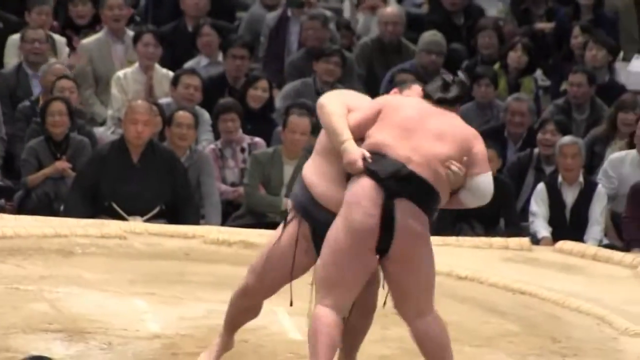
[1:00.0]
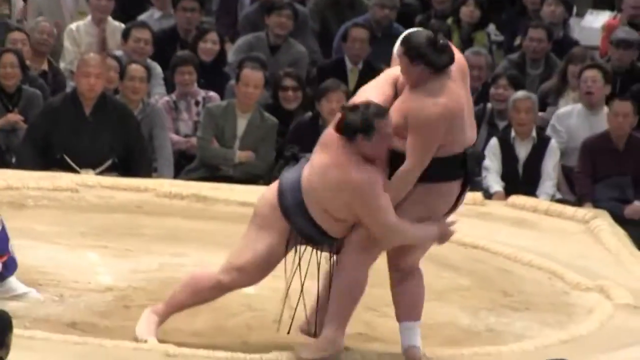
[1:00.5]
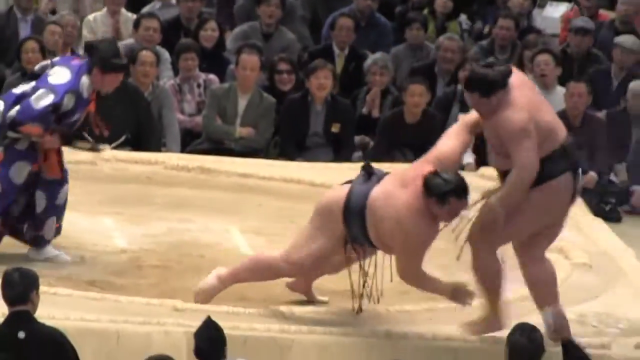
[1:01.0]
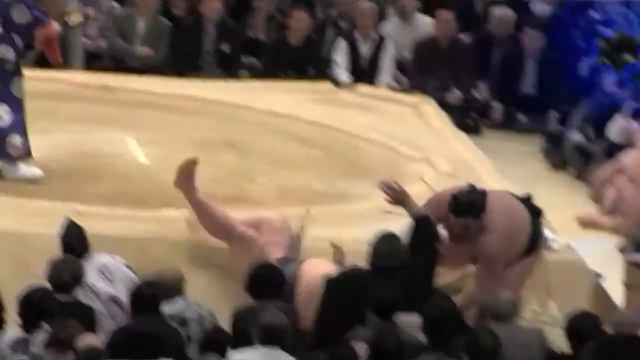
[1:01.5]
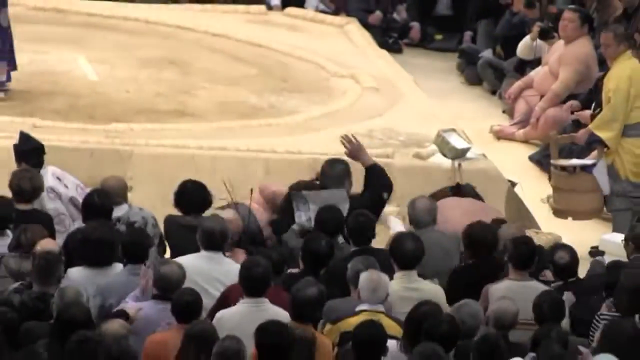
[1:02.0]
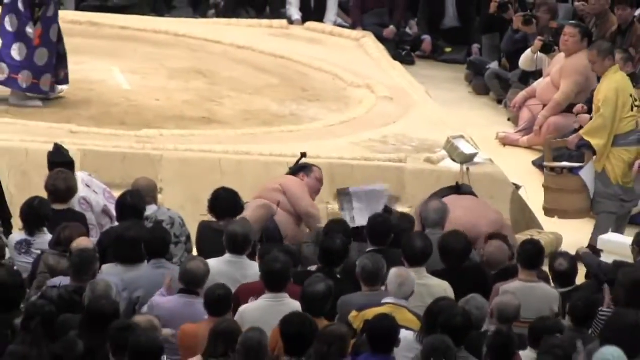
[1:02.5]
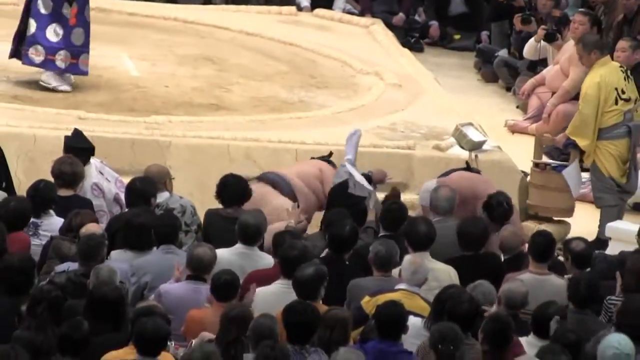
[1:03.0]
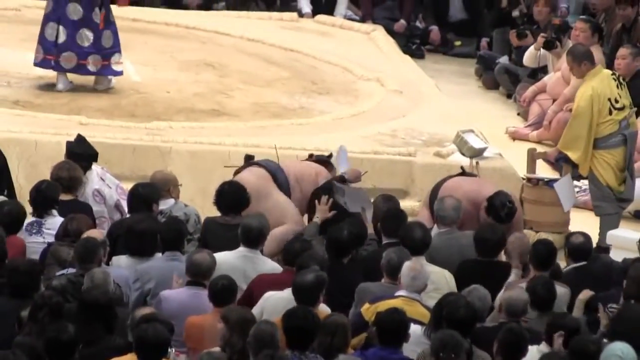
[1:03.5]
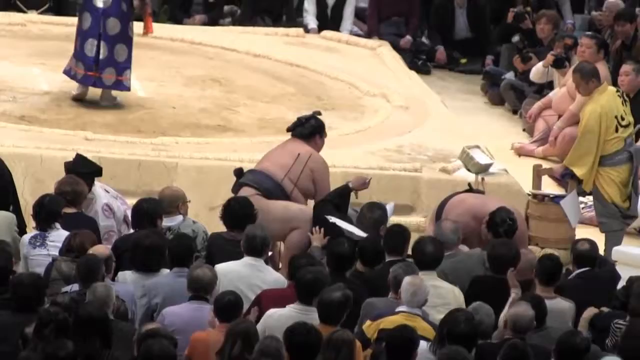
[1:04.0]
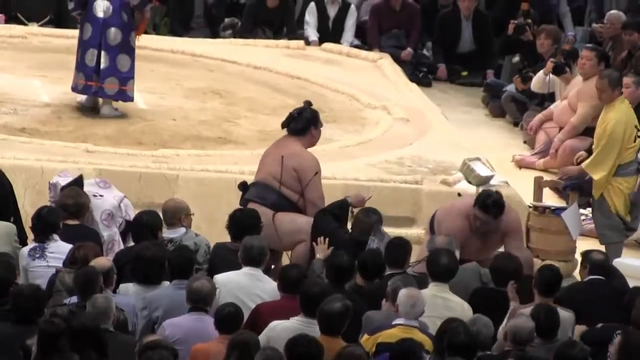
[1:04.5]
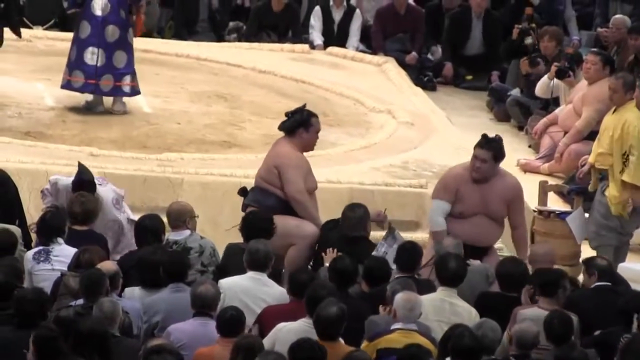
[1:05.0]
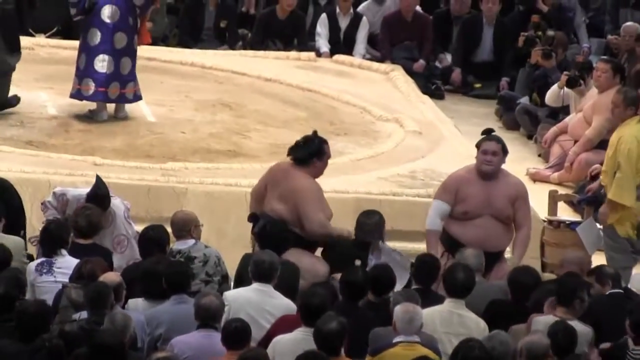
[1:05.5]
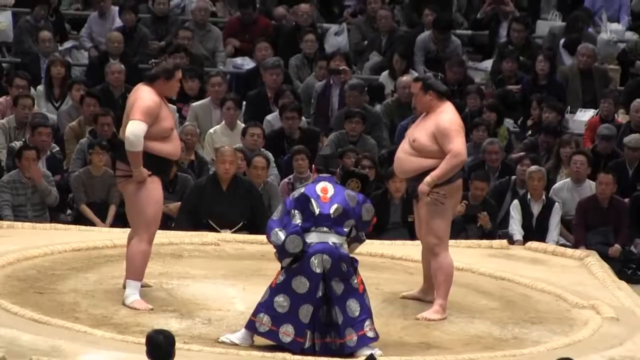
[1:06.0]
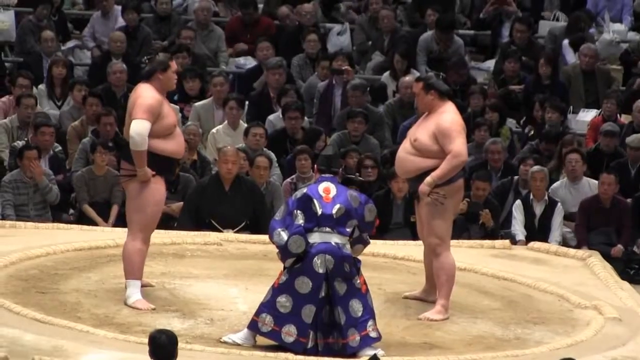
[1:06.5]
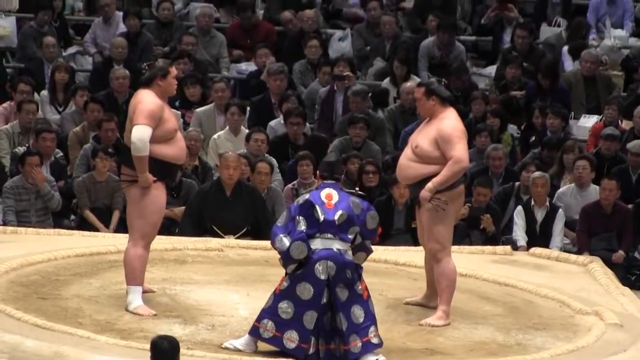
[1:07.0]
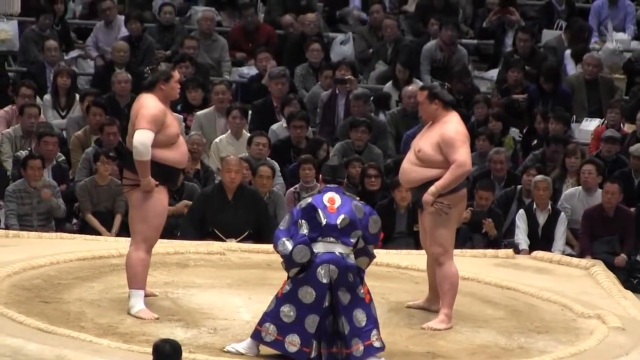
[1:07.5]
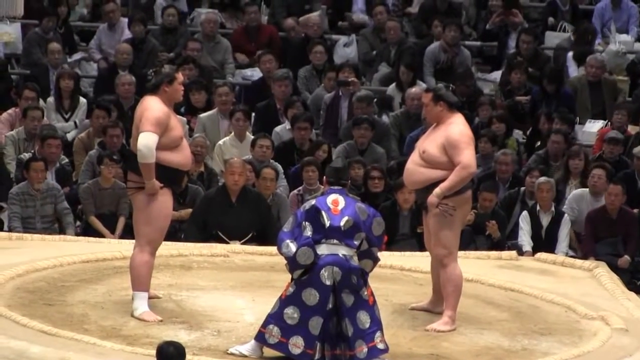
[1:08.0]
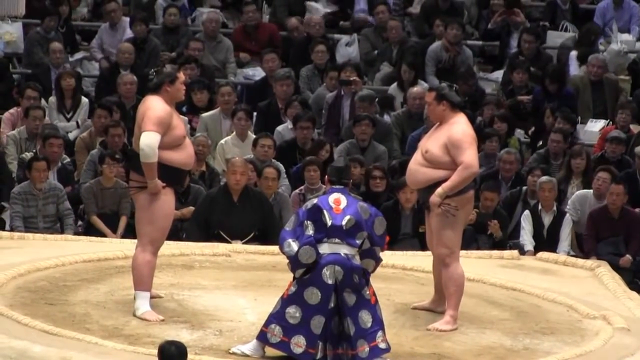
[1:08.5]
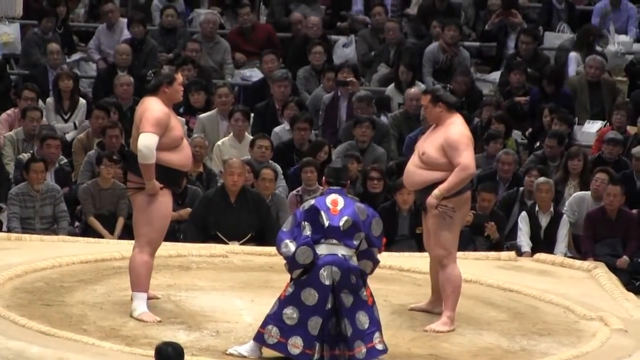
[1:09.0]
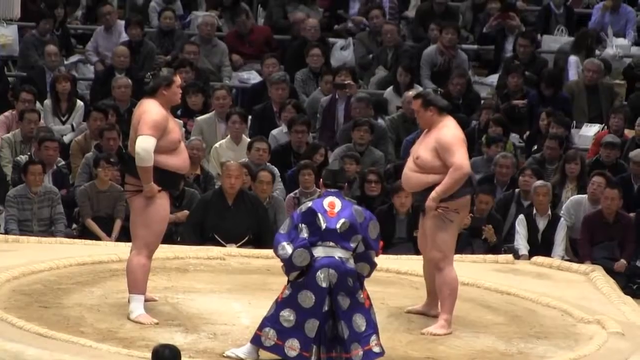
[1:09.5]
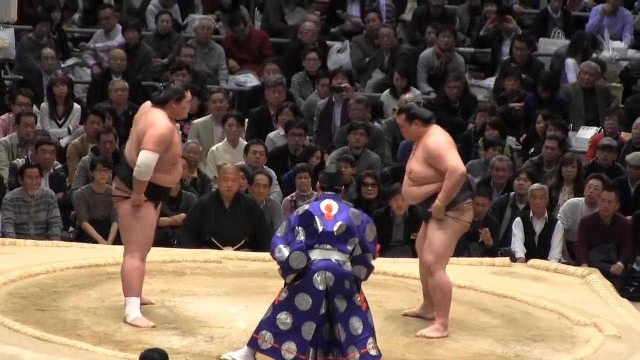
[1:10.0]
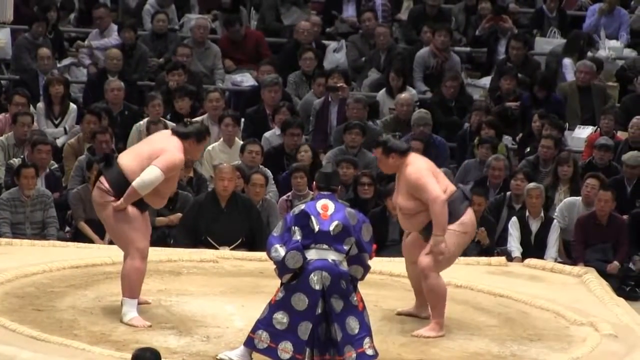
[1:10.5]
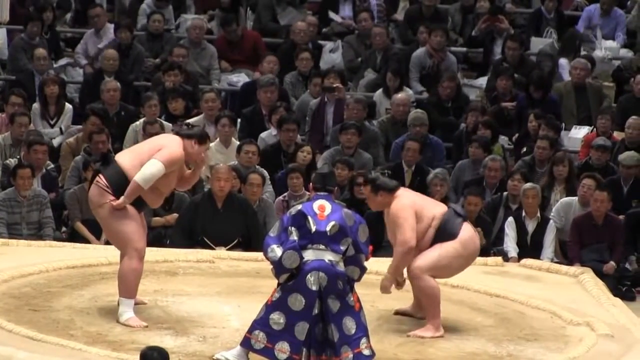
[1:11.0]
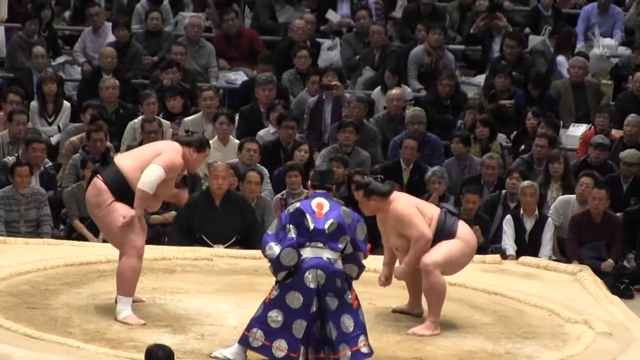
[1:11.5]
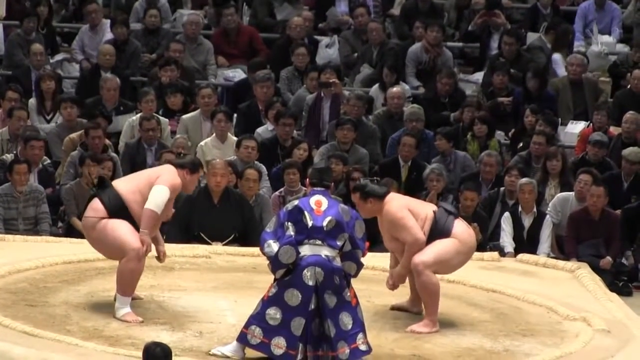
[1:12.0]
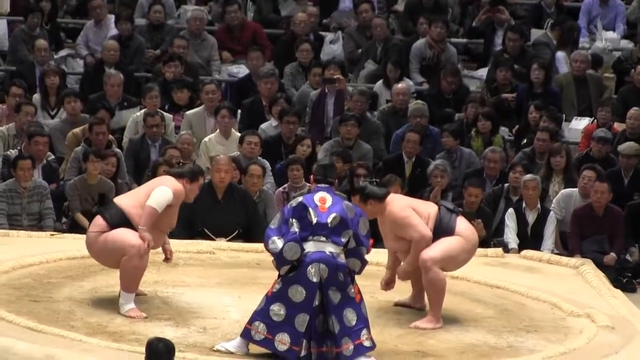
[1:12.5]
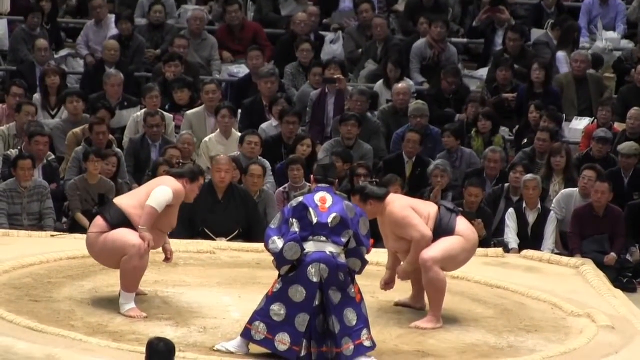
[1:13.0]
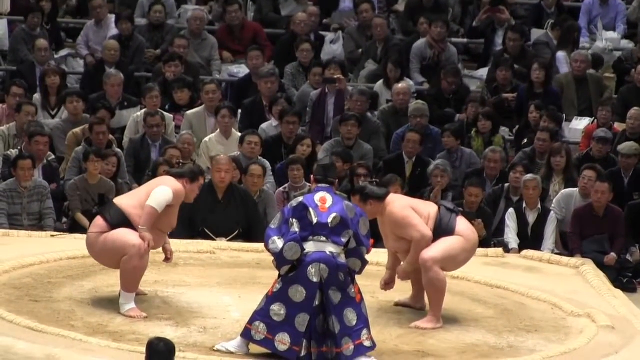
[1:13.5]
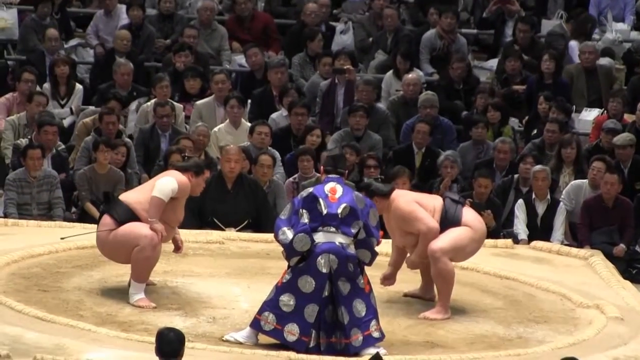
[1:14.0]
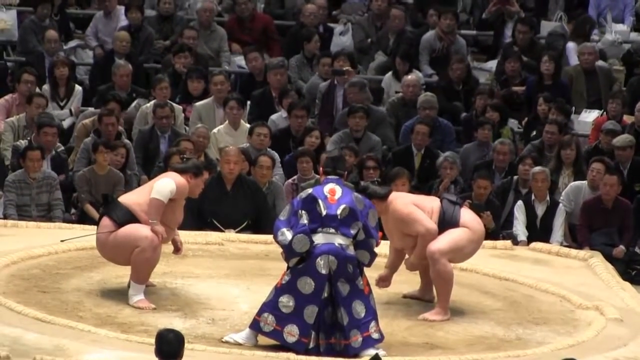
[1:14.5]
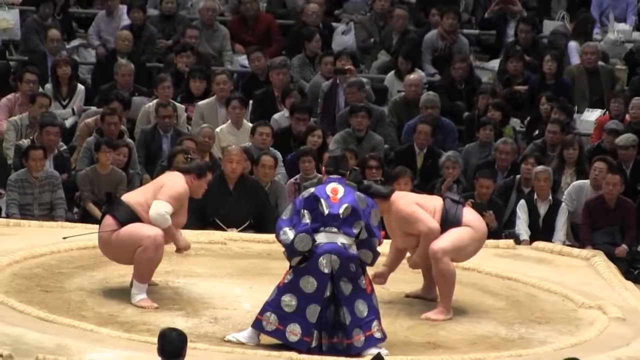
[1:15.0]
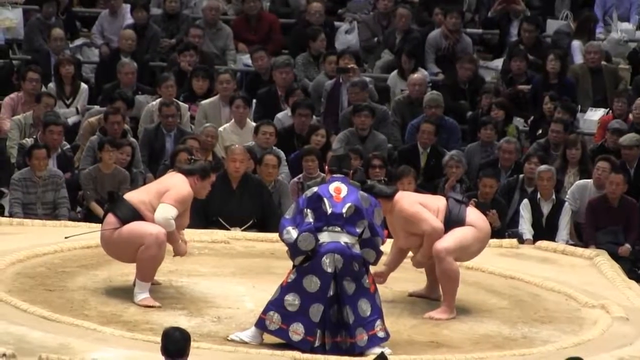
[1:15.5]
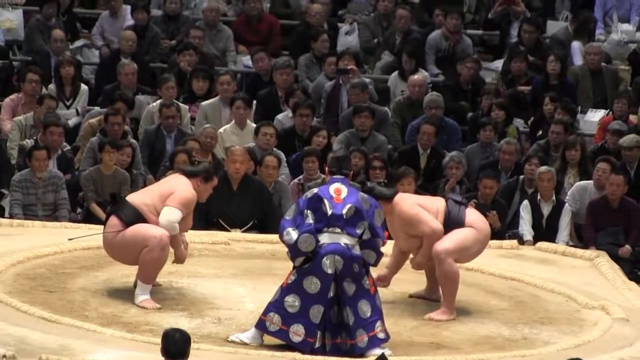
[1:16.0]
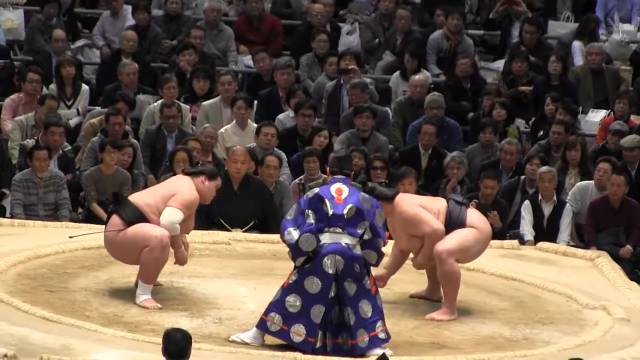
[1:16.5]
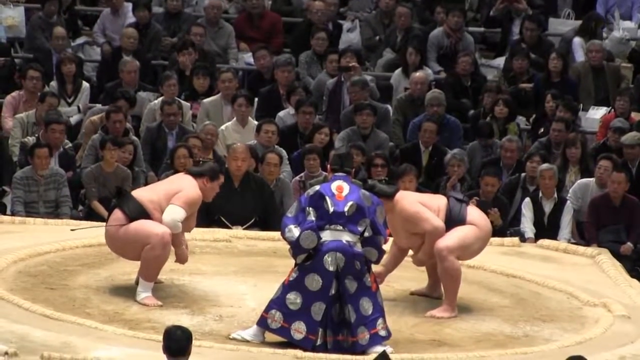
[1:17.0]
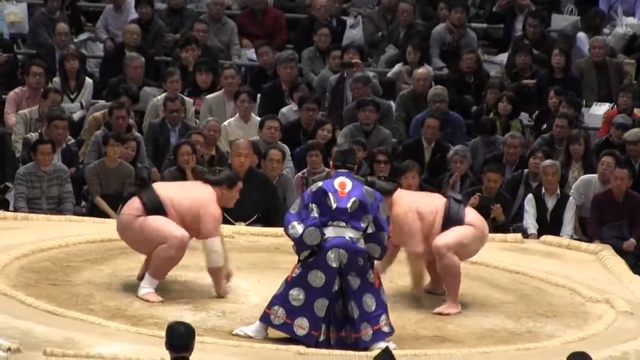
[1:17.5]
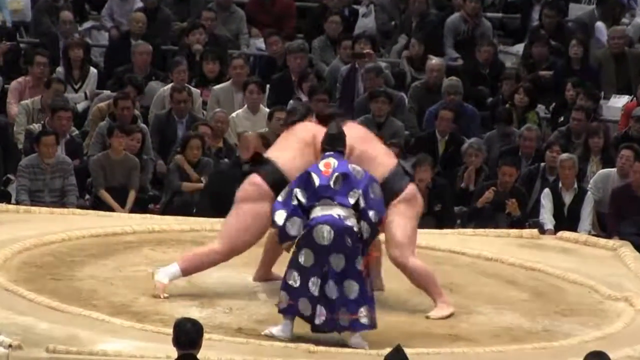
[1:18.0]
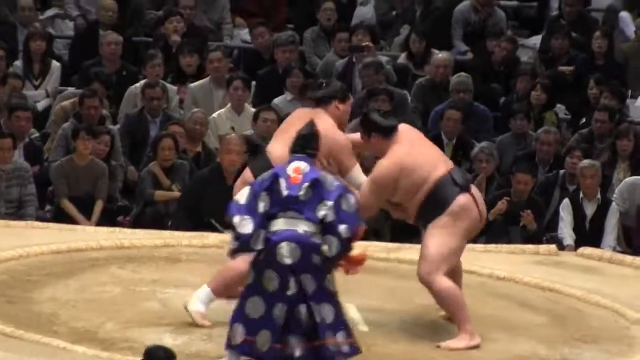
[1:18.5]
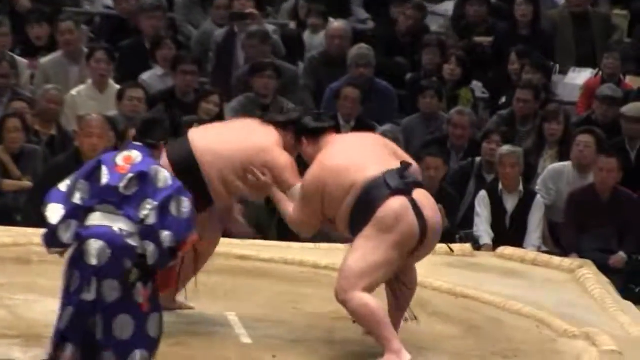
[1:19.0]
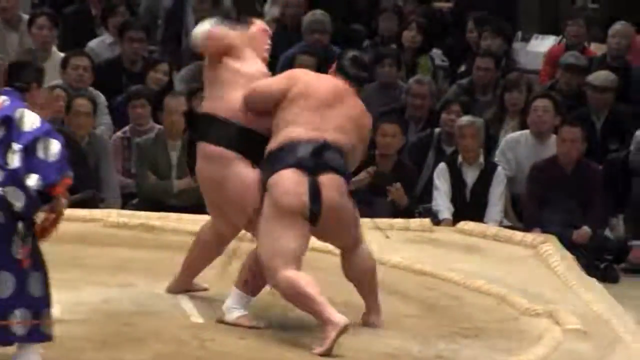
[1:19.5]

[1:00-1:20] Sumo wrestlers in a competition stand and stare at each other; one has a bigger belly than the one on the right. They both lean down and crouch, each making a fist, then go in for the attack, slamming against each other and bumping shoulders very hard. Both of them end up on the ground, leaning on their knees, and then get back up. They go back into the center ring, which is all sand similar in color to a beach. Several people in the audience cheer them on. Another sumo wrestler sits down watching everything. A referee is dressed very fancy in a blue, silky robe covered in several very shiny silver circles, and he has a tassel.